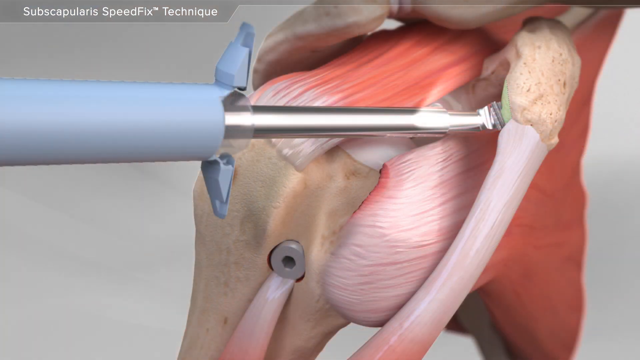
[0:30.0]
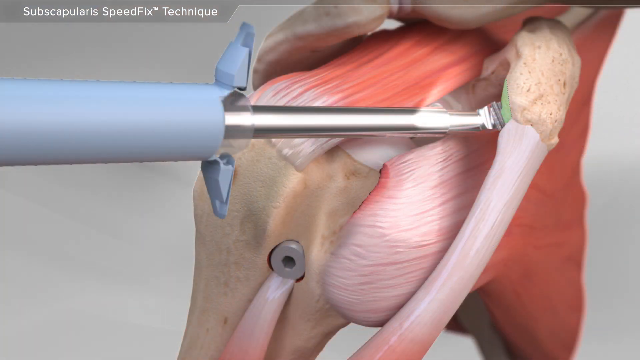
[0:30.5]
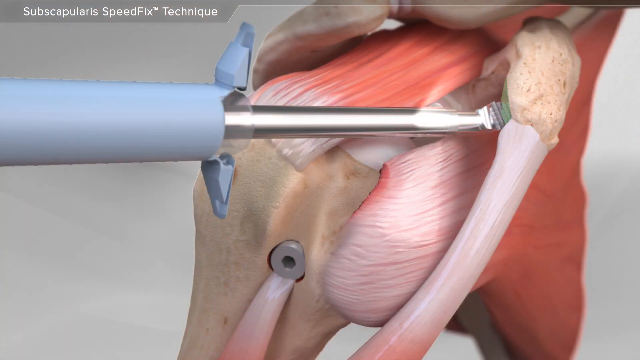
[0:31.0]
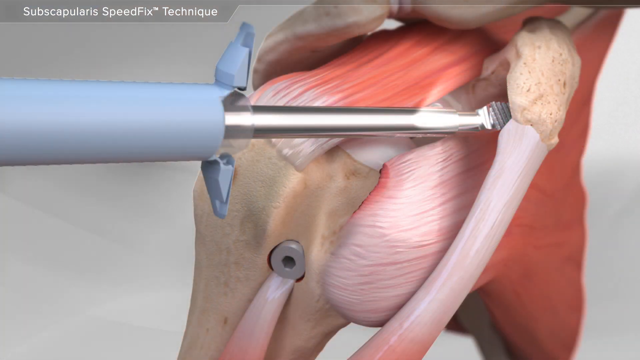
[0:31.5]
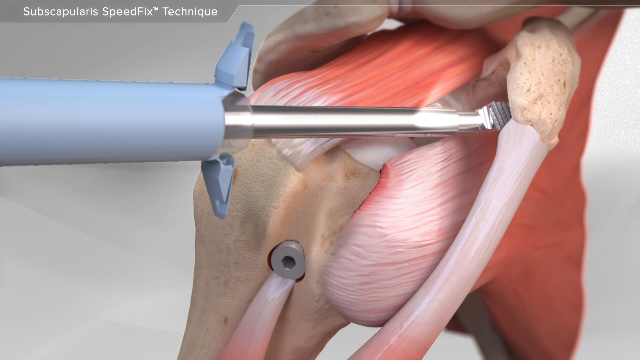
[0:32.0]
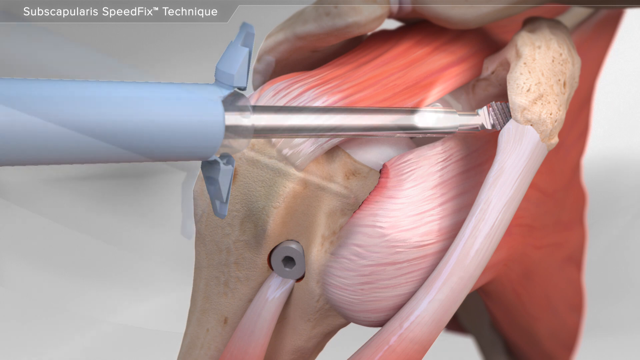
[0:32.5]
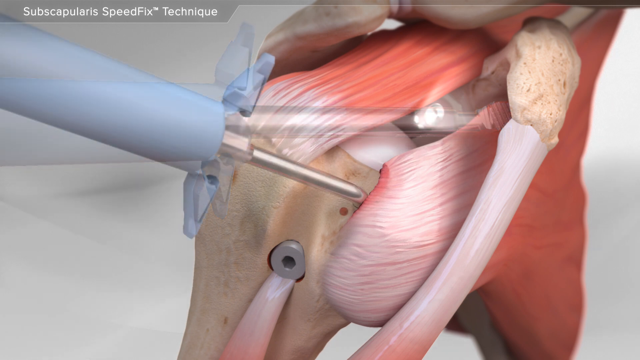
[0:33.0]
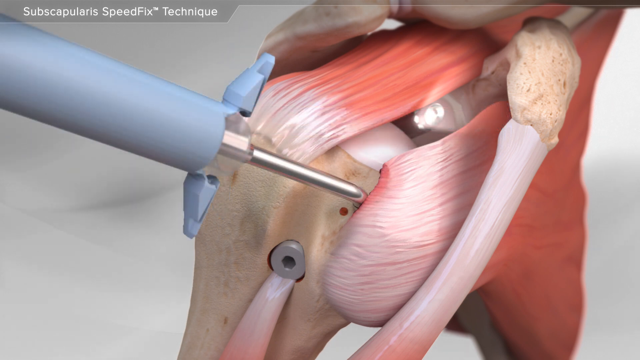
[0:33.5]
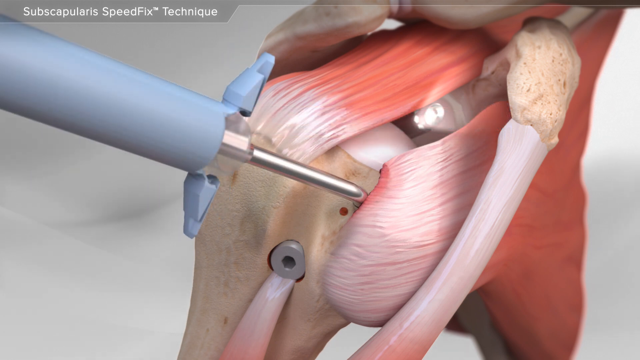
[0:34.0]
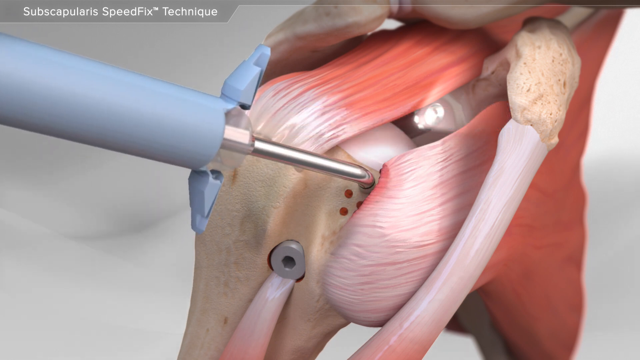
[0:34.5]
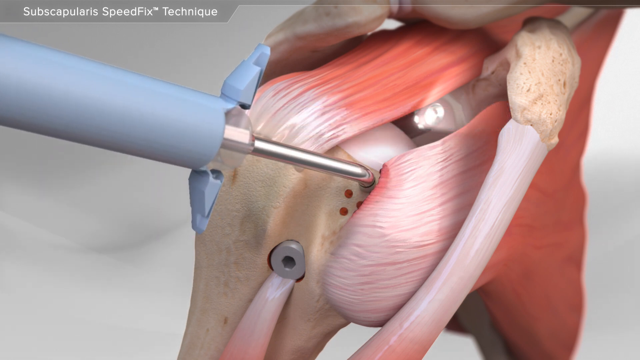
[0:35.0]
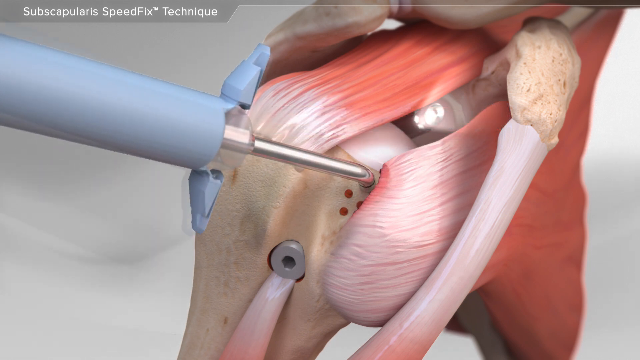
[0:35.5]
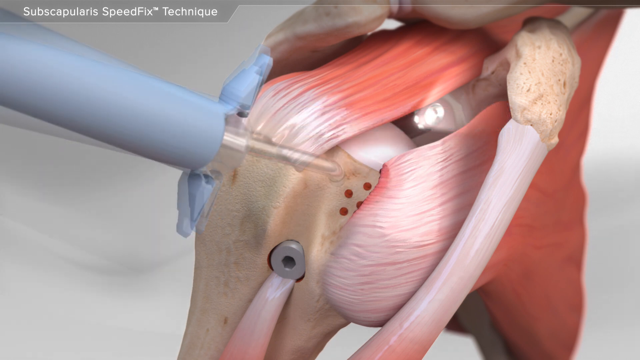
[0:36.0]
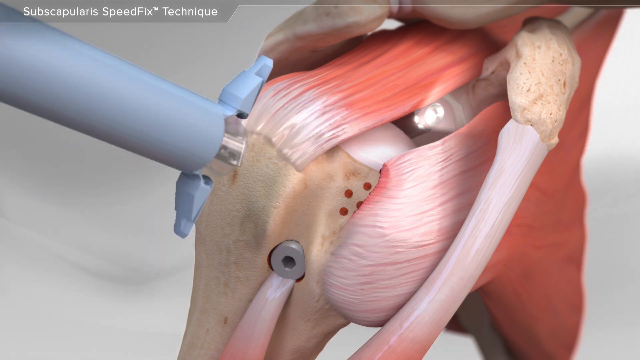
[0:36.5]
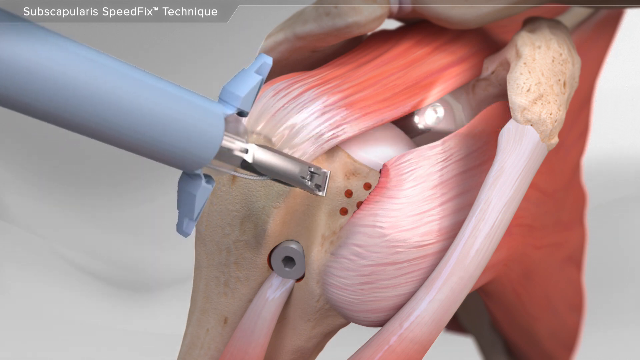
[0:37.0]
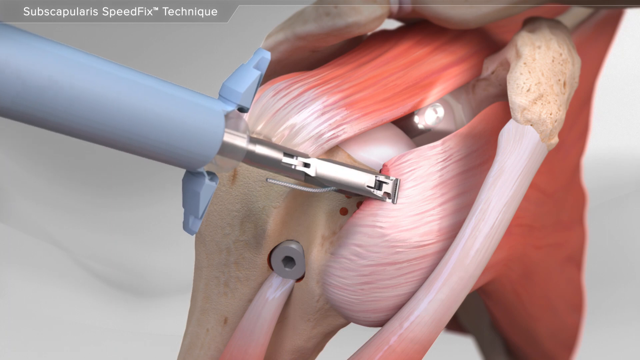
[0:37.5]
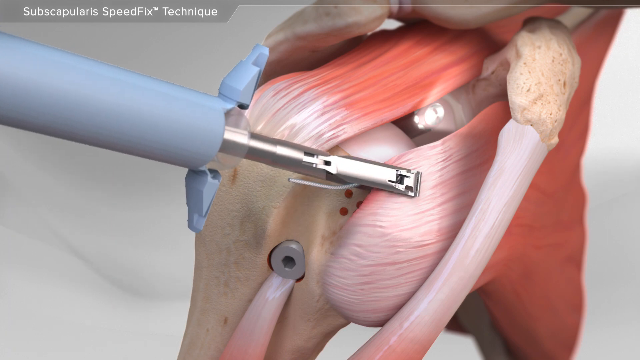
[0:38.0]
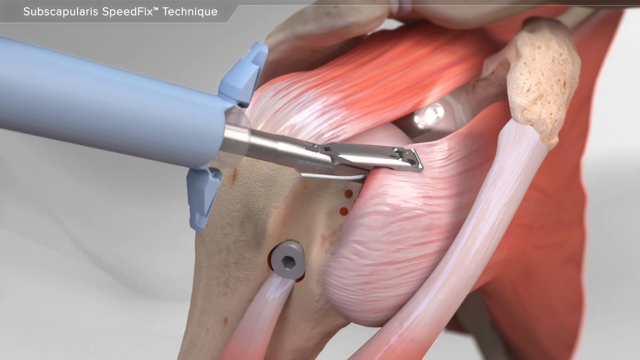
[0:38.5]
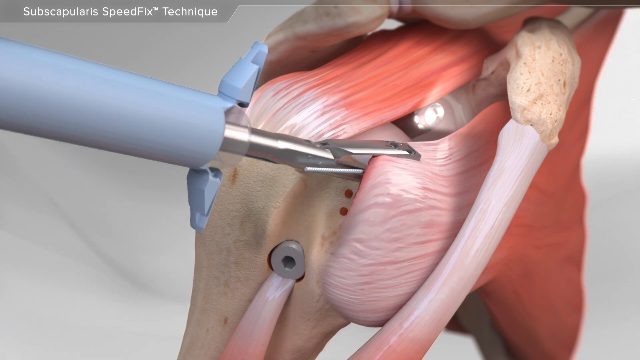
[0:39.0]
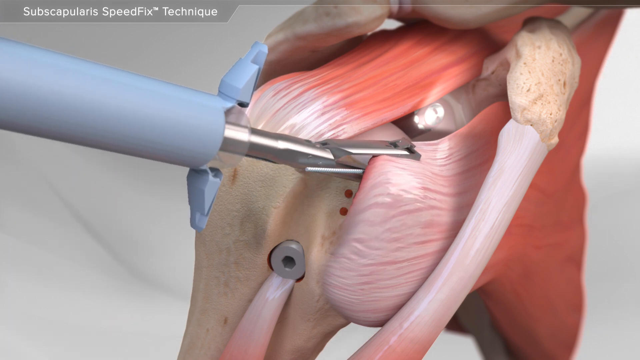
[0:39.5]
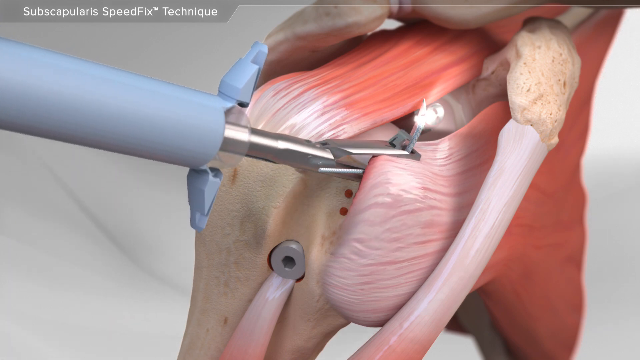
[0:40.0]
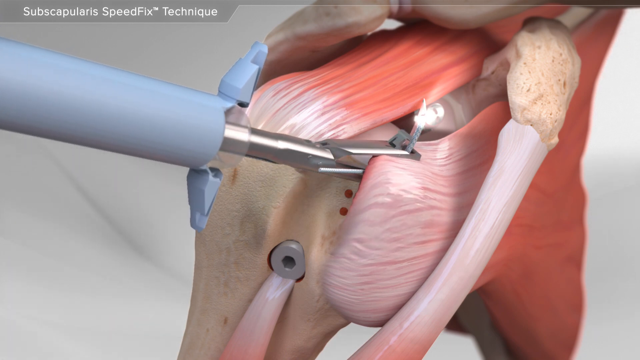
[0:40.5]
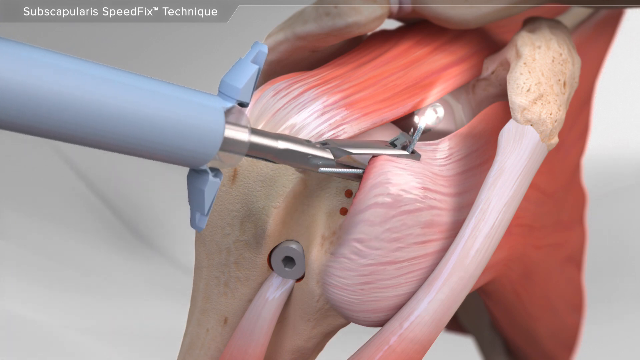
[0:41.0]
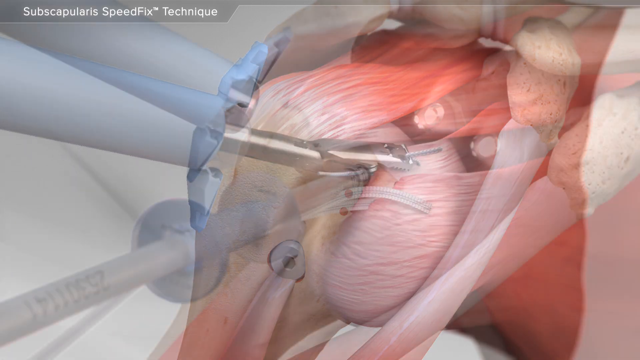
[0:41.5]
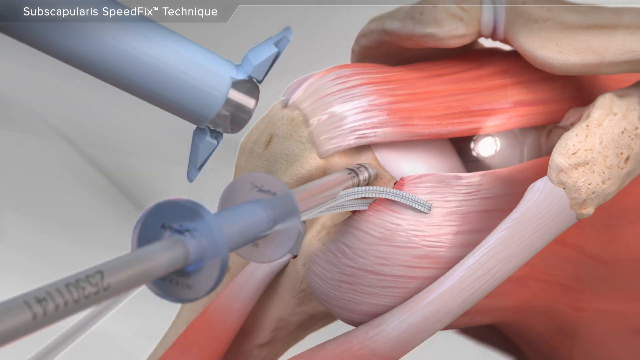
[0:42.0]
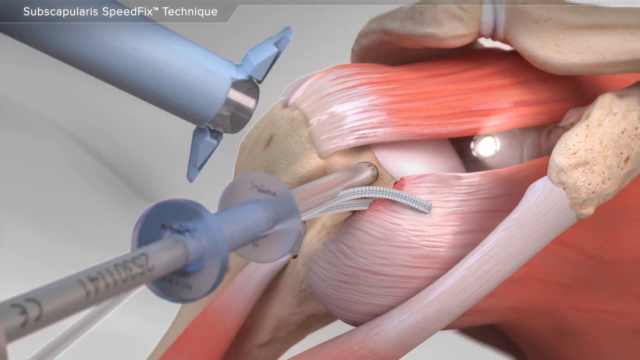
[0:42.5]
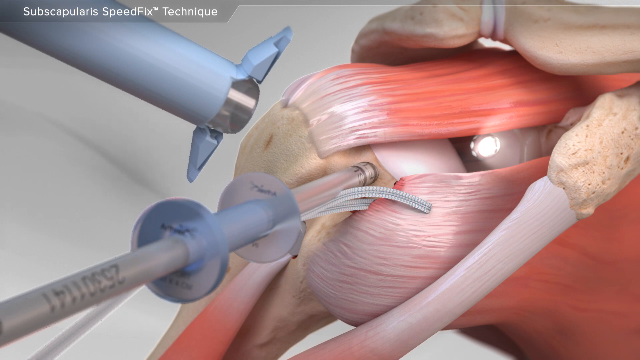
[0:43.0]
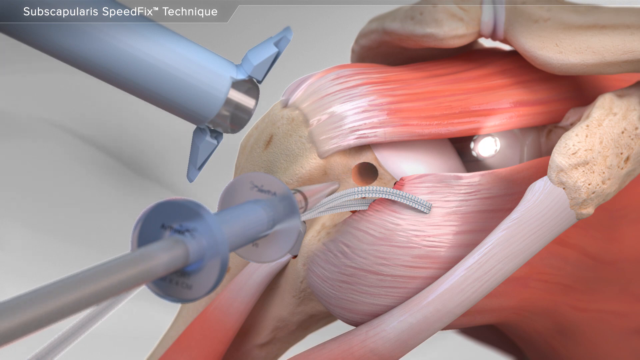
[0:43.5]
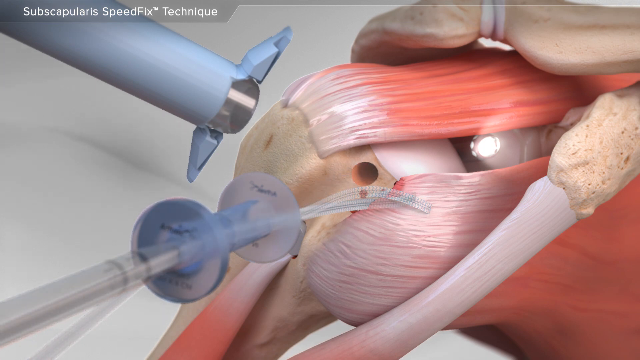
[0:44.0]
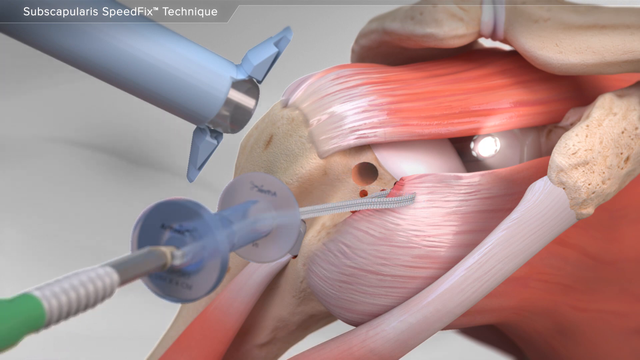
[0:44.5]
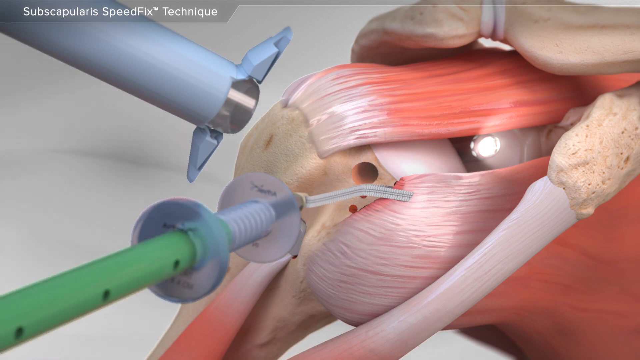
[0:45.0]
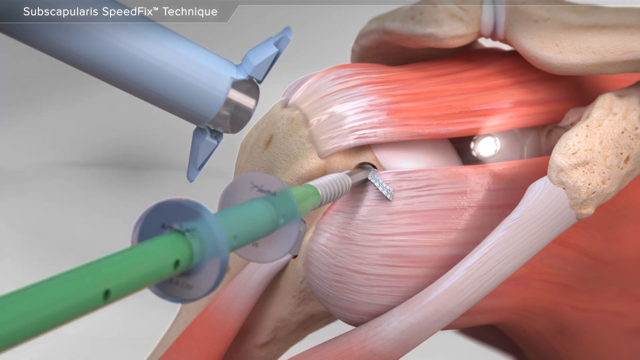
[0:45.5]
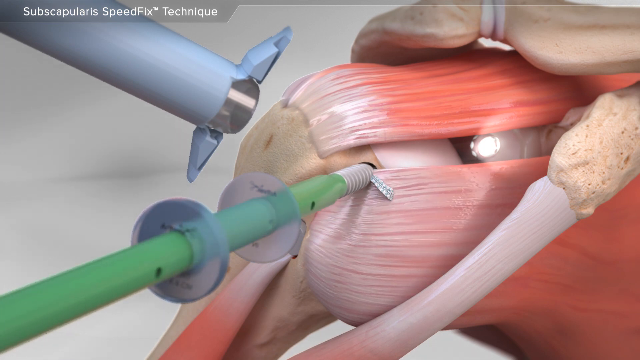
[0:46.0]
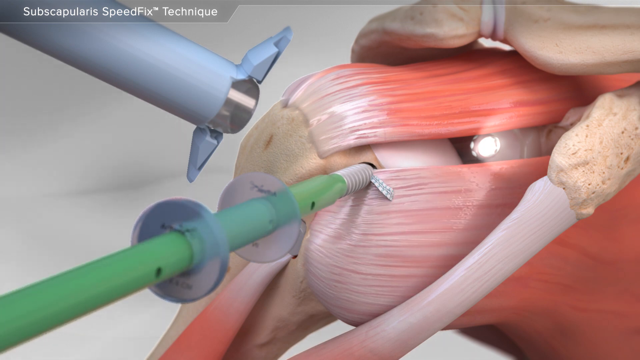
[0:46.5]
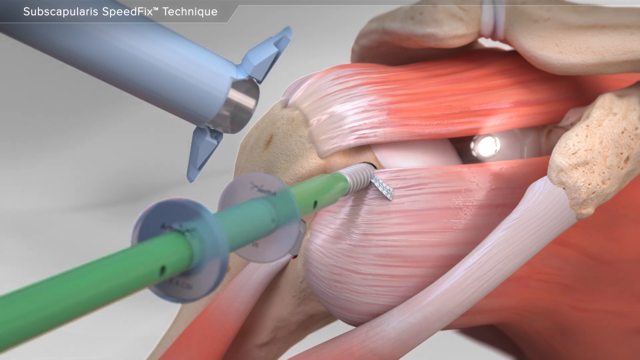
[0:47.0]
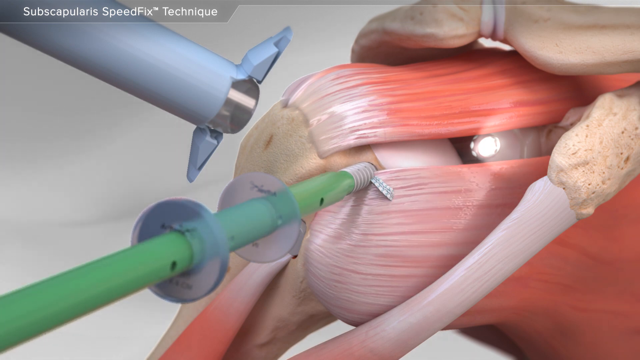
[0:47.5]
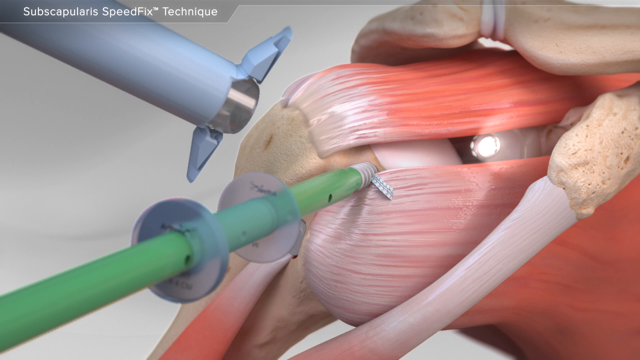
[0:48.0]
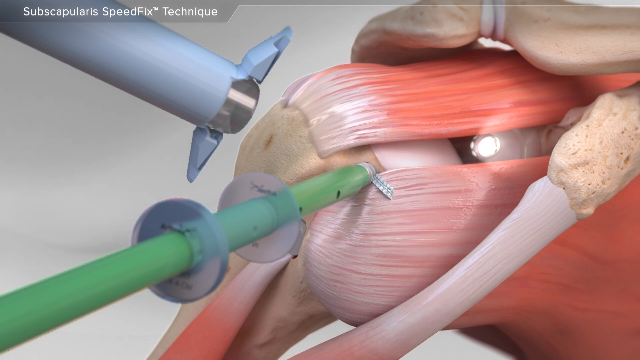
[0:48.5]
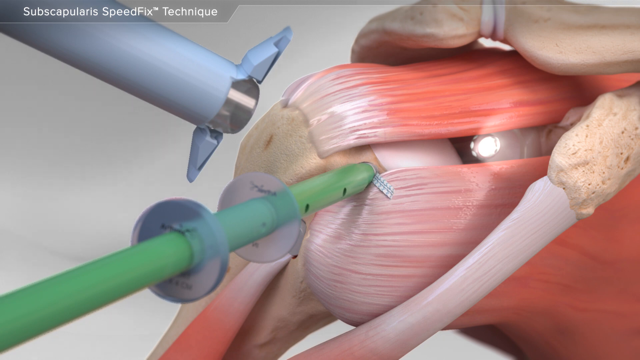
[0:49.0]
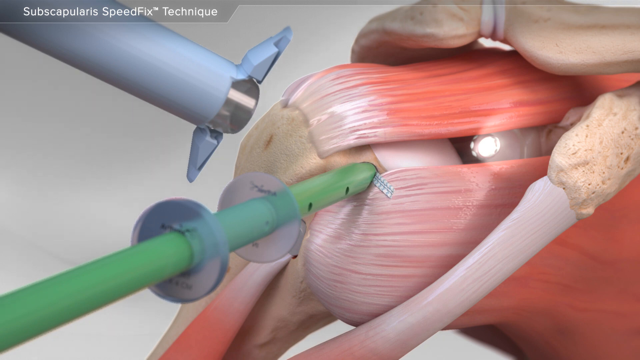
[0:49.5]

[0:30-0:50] What looks like a computer animation of a surgical procedure plays against a gray background. In the upper left corner, a darker gray rectangular box contains white lettering that reads "subscapularis speed fix TM technique". The image shows a very up-close view of the shoulder interior with muscles and bones. Coming from the left side of the frame, a device with a blue handle and a metal tip is used to manipulate the interior of the muscle; where it connects with and touches the bone and muscle, it glows green. It is then moved lower to another part of the muscle and used there, leaving small circular red dots. An arm then comes out of the surgical device, grabs hold of the muscle with a pincher and manipulates it. Then a small drill drills what looks like a hole into the bone, grabs the muscle and screws it in to attach it into the hole that was just drilled.